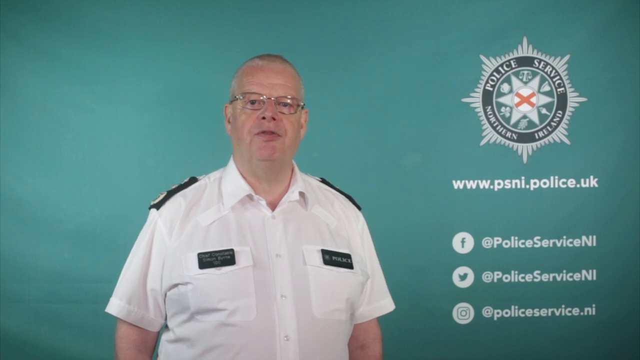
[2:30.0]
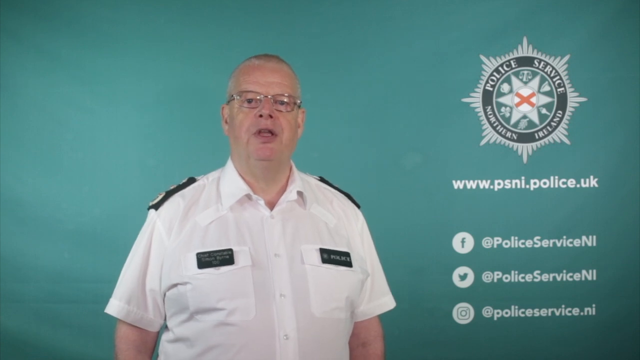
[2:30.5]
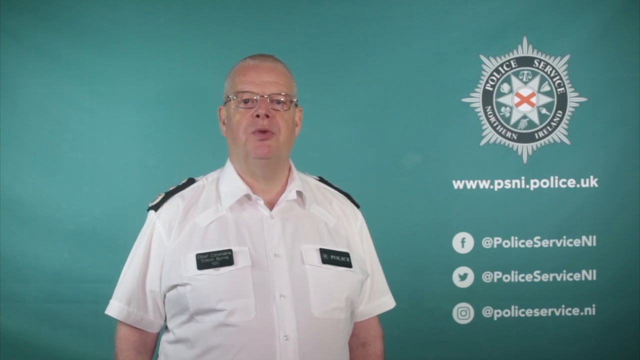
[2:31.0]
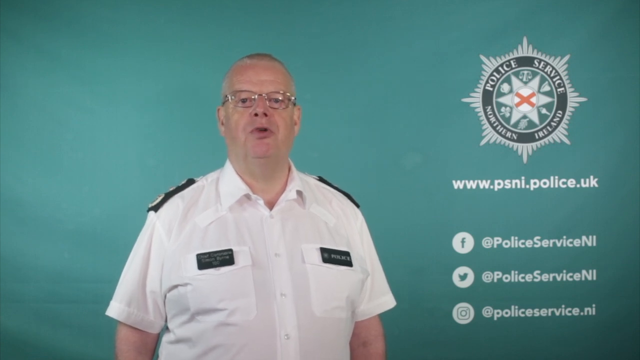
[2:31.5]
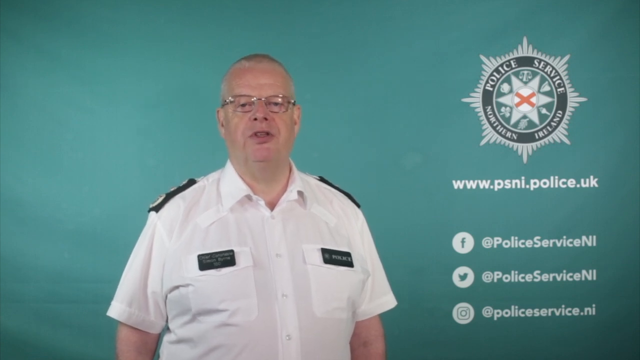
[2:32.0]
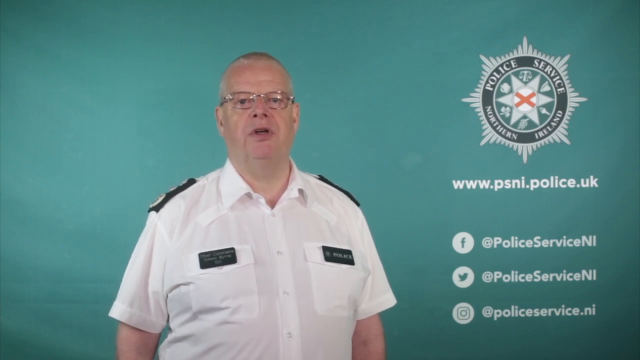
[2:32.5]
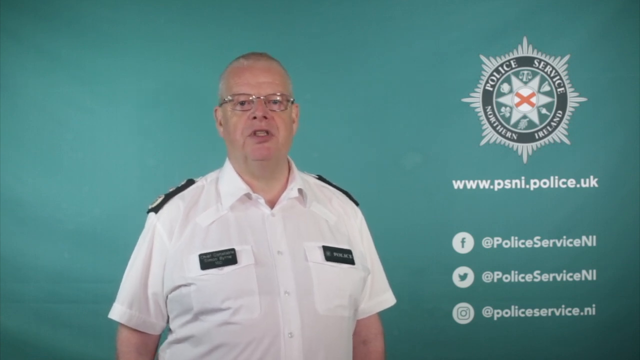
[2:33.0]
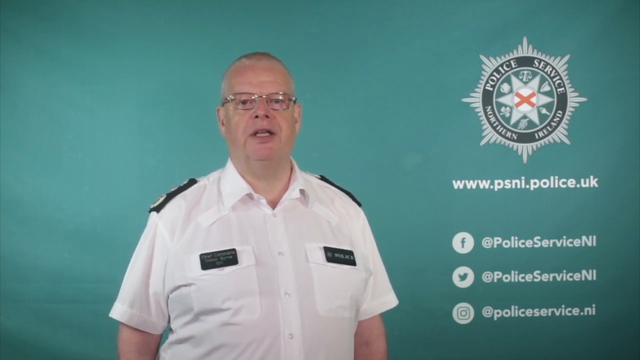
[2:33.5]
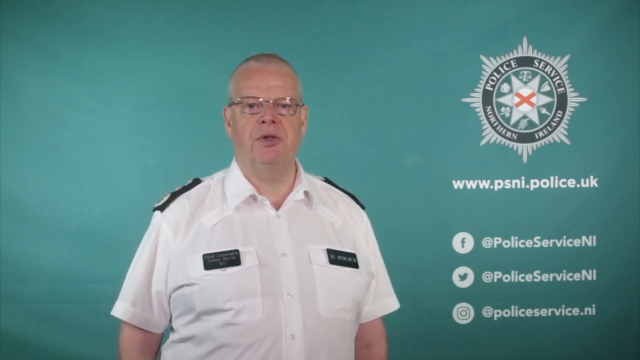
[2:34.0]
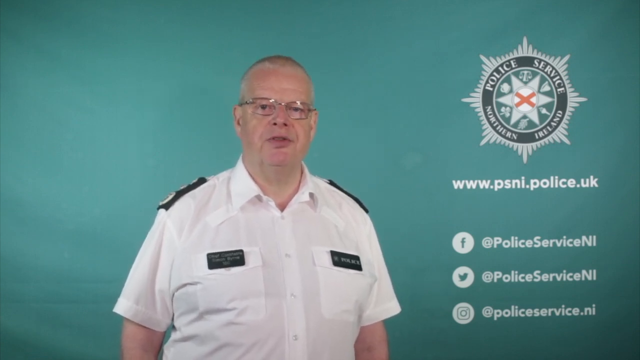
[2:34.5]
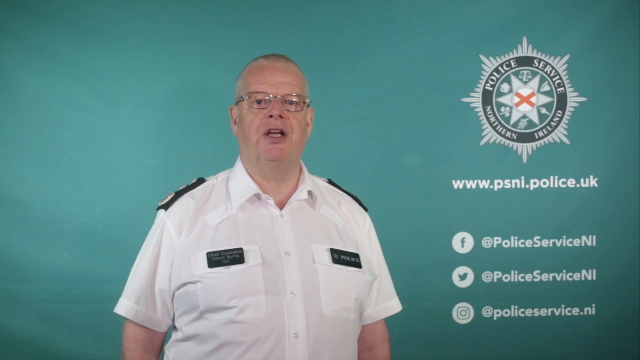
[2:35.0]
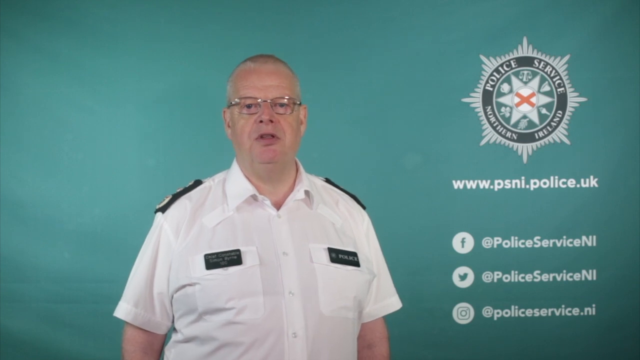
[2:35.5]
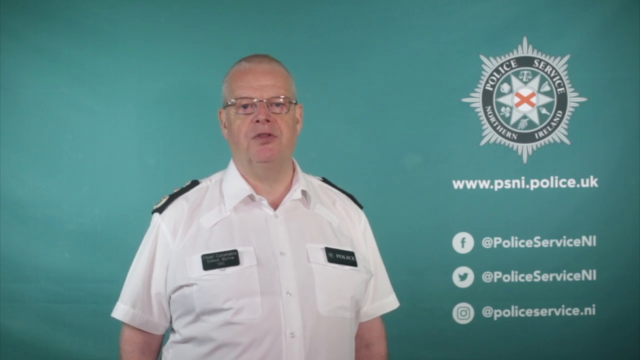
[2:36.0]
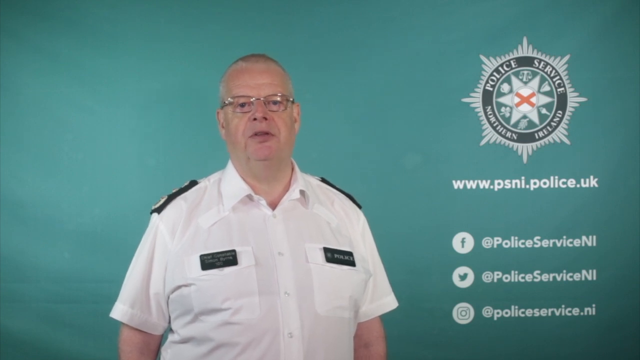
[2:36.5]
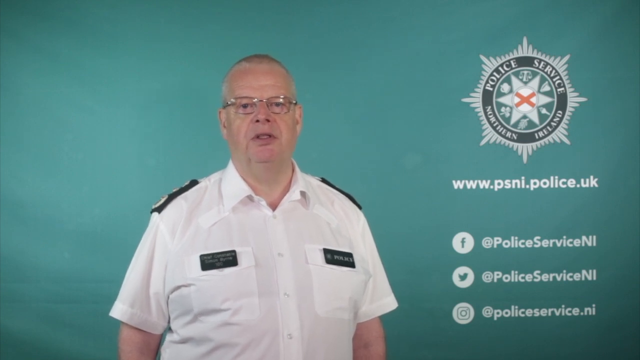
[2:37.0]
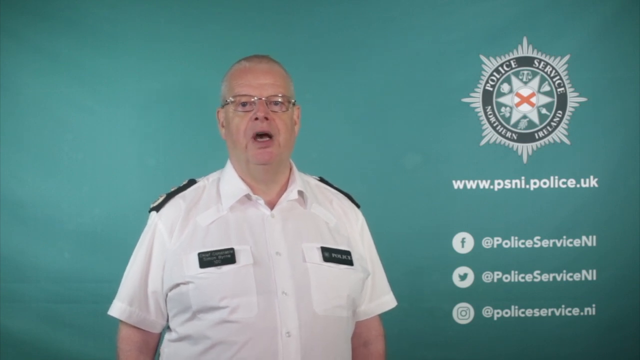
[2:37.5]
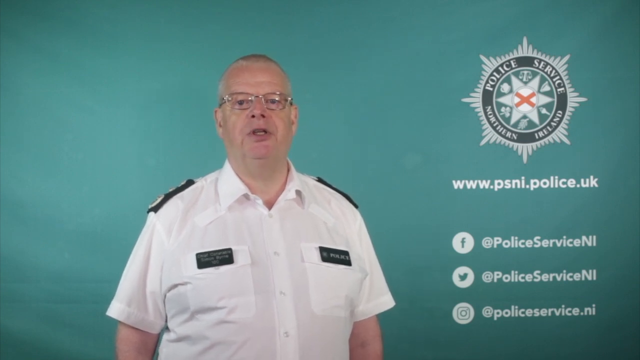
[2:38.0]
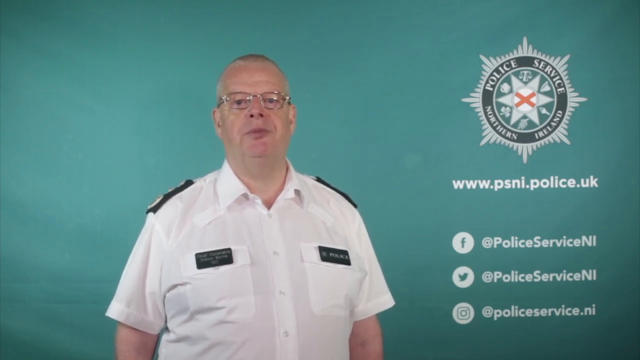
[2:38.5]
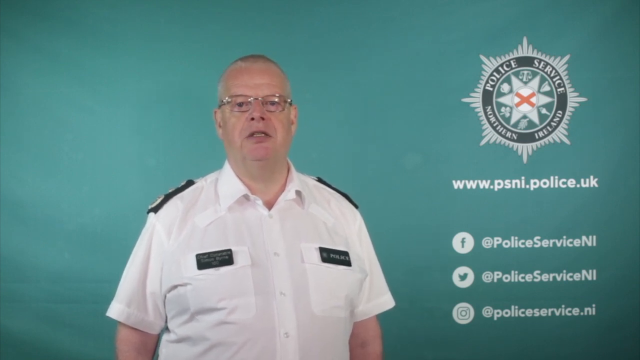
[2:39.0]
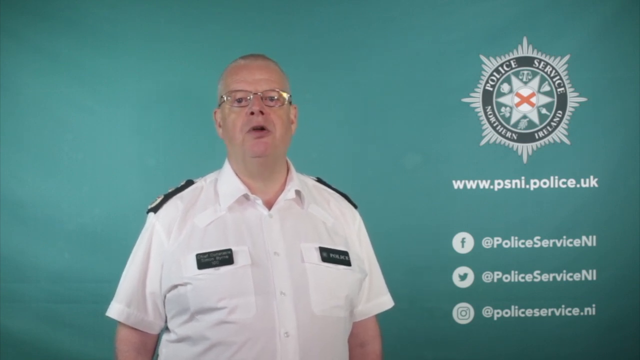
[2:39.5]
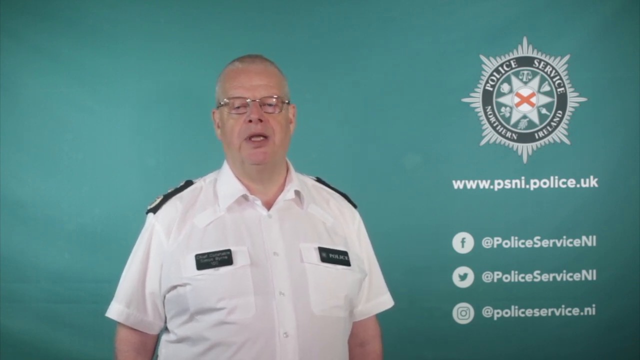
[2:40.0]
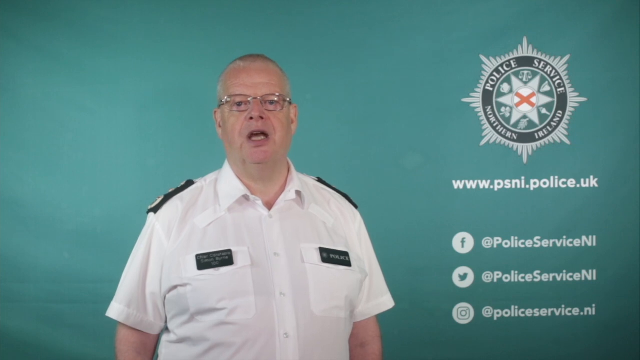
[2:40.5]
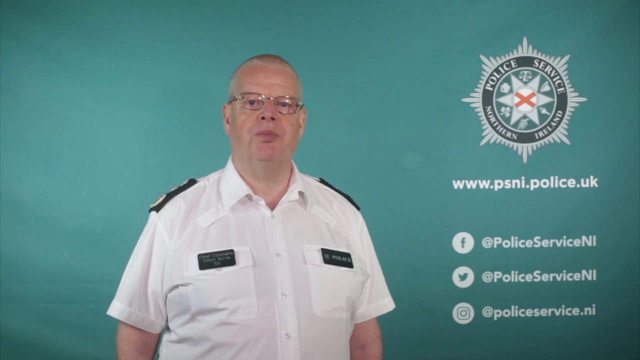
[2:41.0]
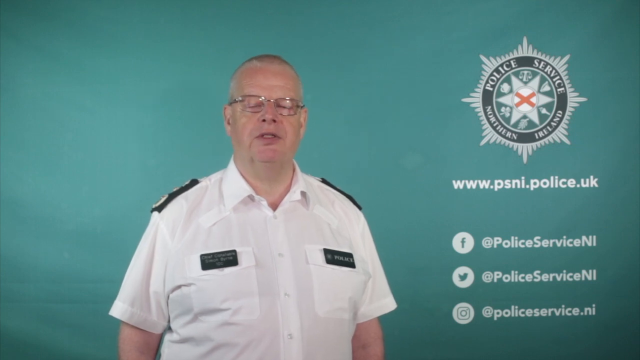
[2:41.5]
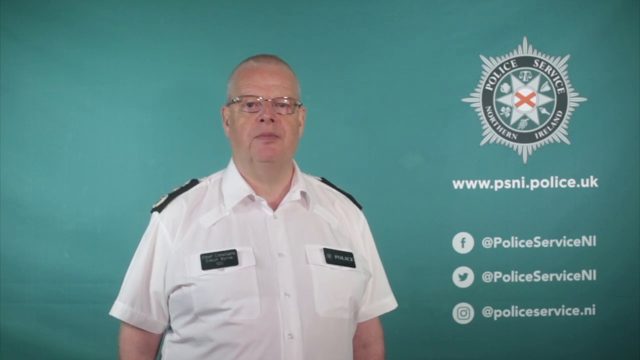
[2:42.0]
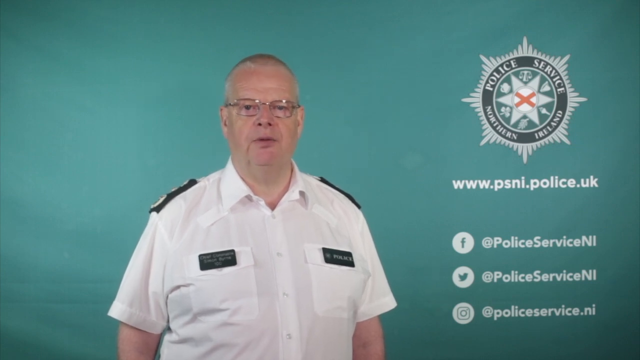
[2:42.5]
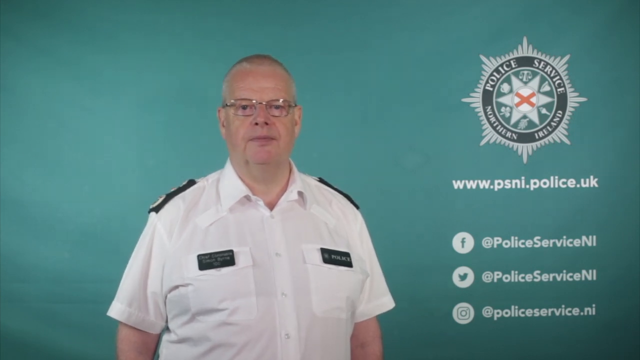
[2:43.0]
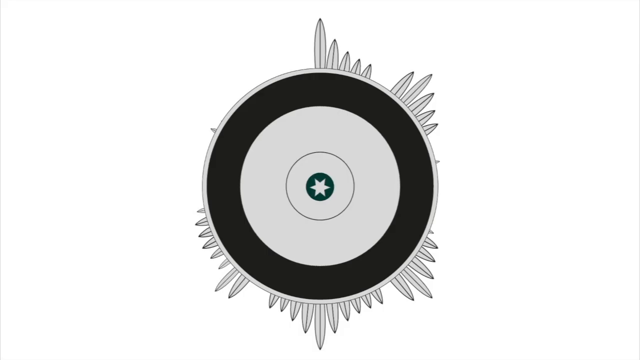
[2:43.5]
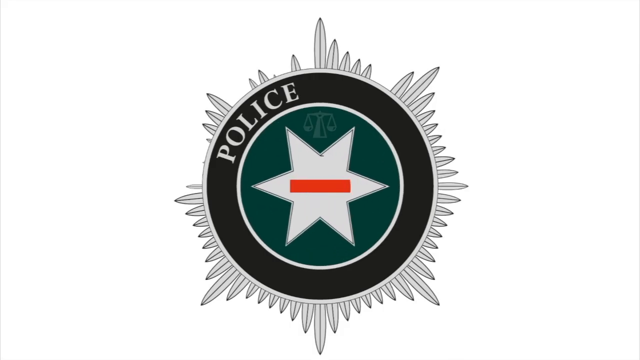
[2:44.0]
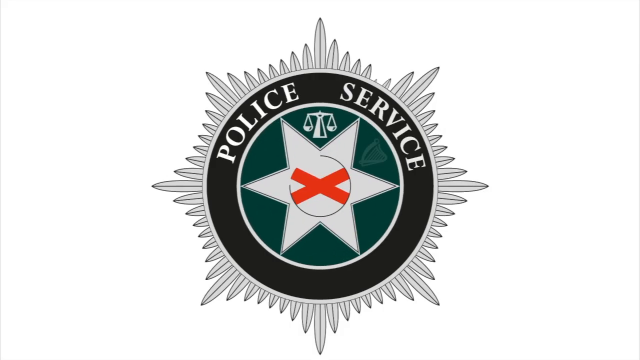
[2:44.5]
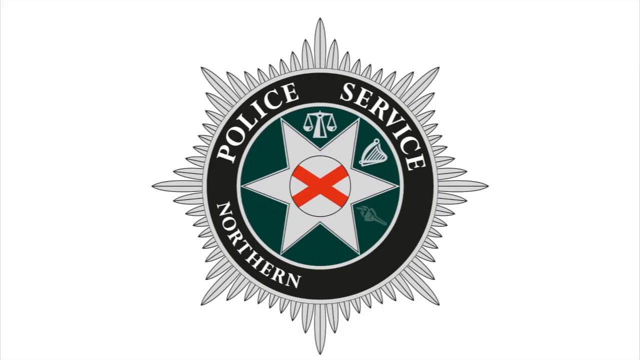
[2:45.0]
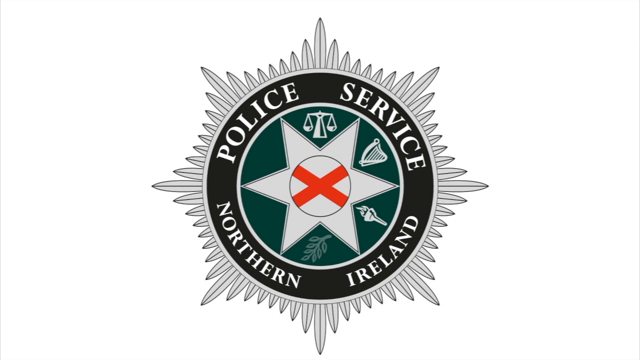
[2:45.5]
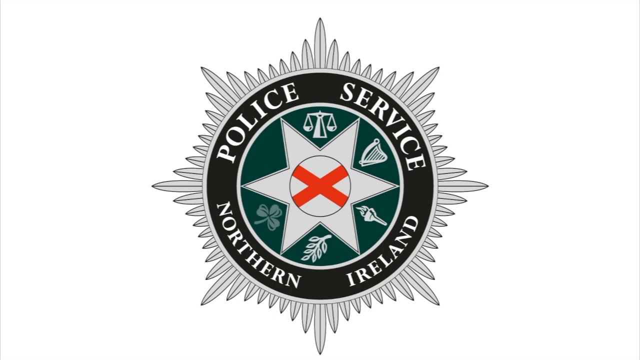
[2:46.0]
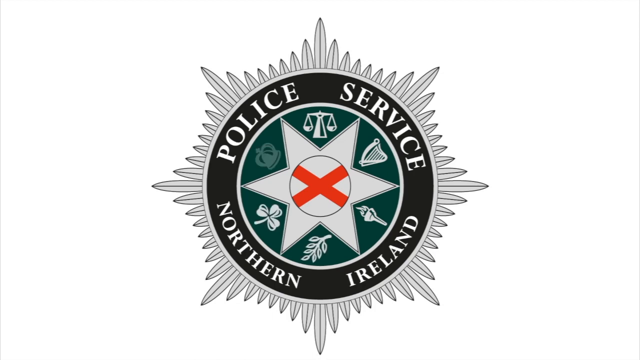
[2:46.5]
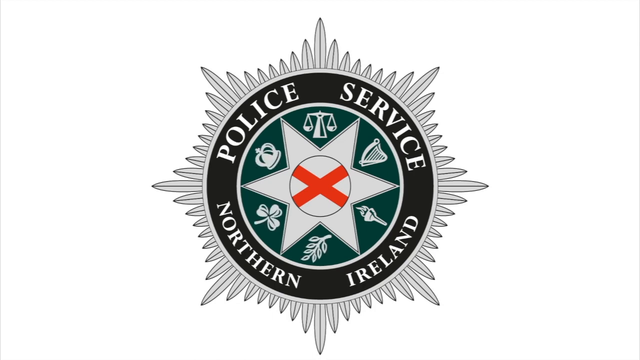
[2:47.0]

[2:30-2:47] The man continues talking with subtle mouth movements in front of the same unchanged bluish-green background, with the insignia still on the right-hand side. He seems completely apathetic, showing little to no change in emotion, and has strange mannerisms. As he finishes talking, the screen fades to white and the insignia comes up as a closing: it grows out from its own centre, and then the symbols appear in the points of the star, starting from the top and going clockwise.